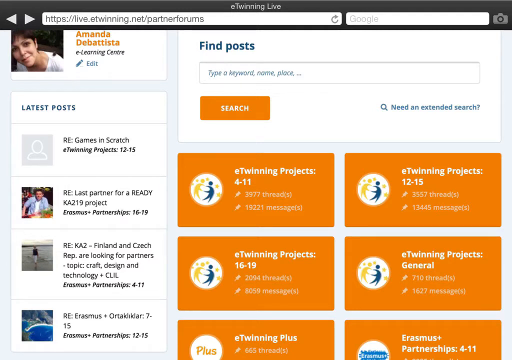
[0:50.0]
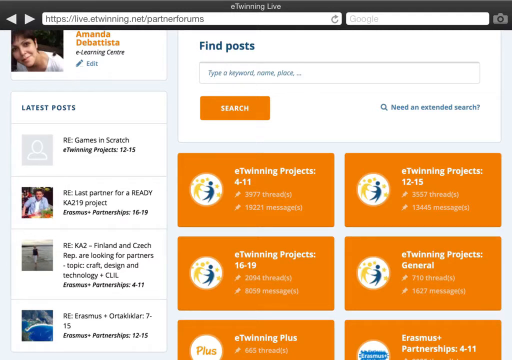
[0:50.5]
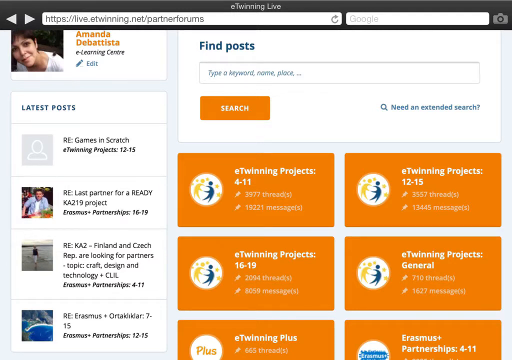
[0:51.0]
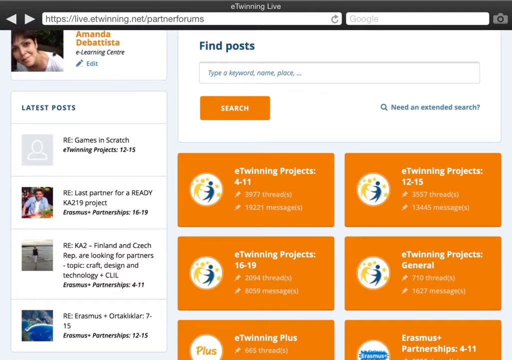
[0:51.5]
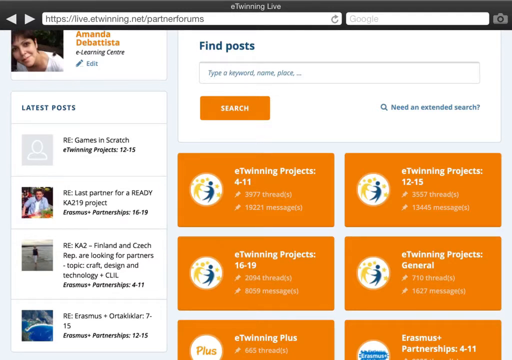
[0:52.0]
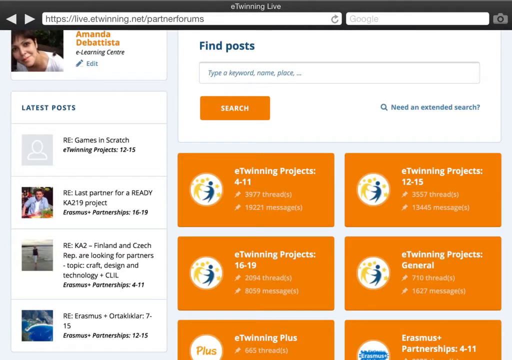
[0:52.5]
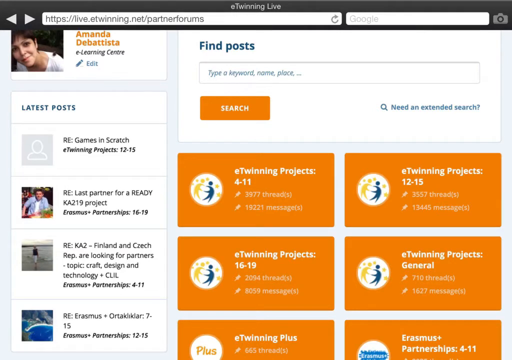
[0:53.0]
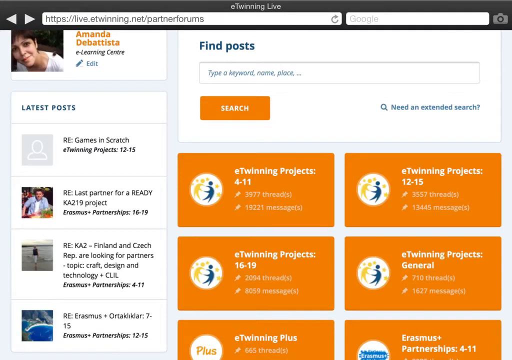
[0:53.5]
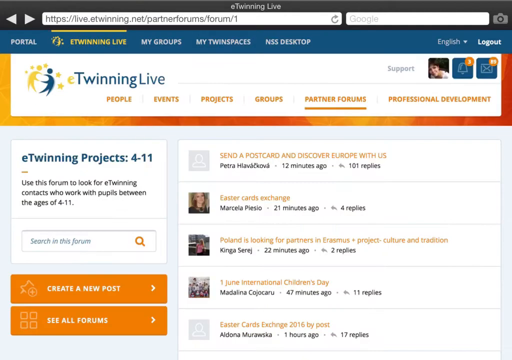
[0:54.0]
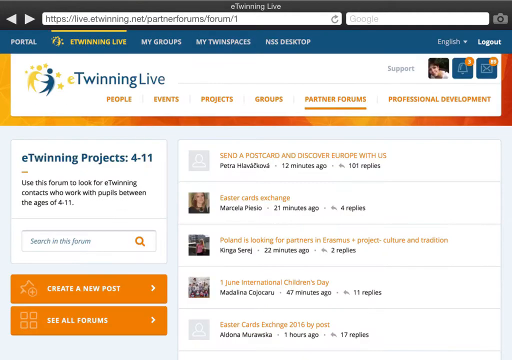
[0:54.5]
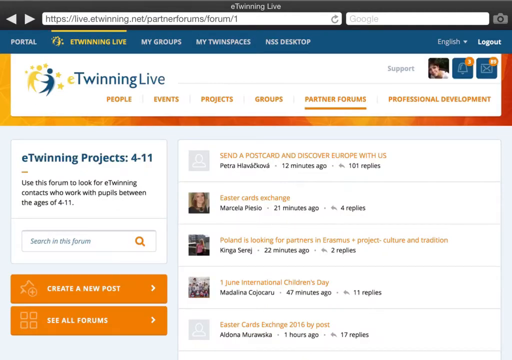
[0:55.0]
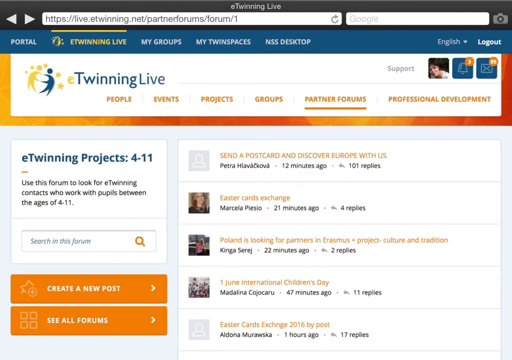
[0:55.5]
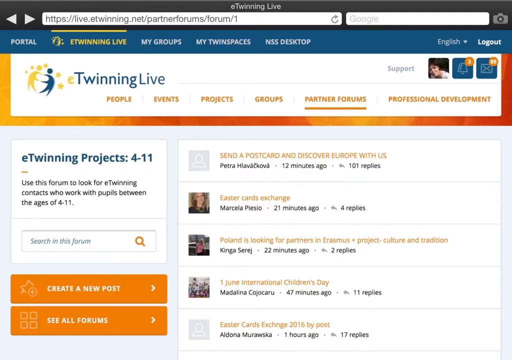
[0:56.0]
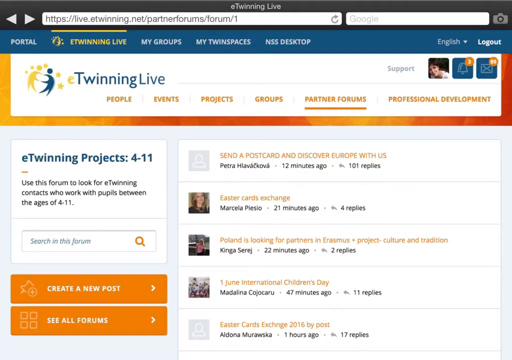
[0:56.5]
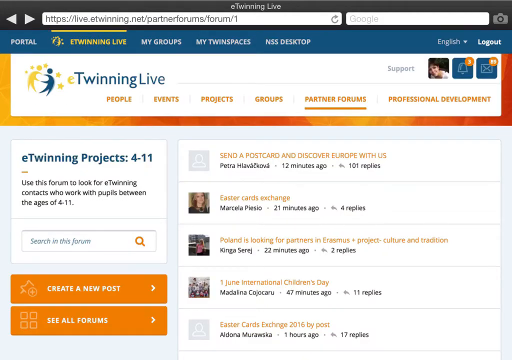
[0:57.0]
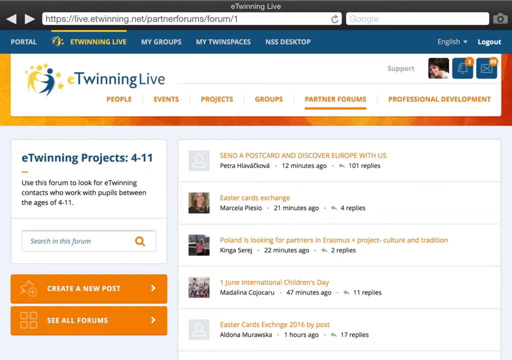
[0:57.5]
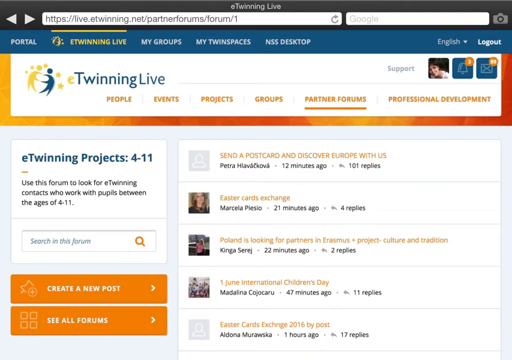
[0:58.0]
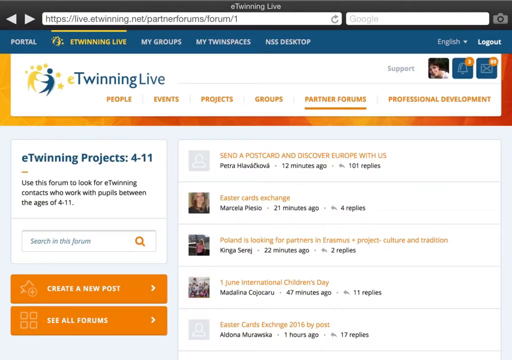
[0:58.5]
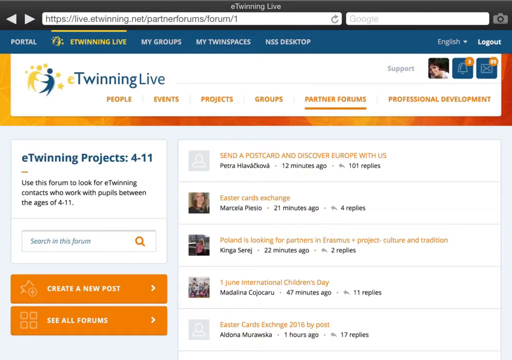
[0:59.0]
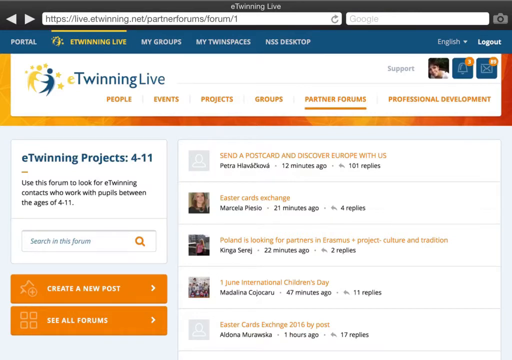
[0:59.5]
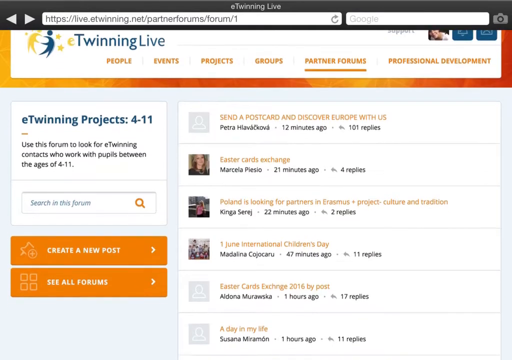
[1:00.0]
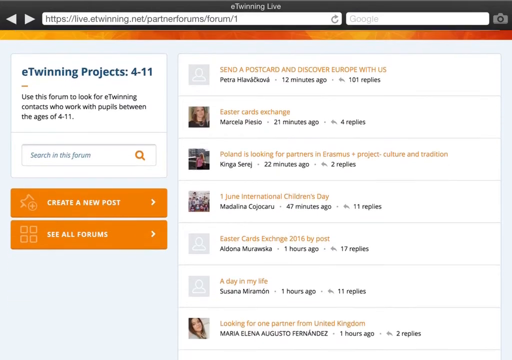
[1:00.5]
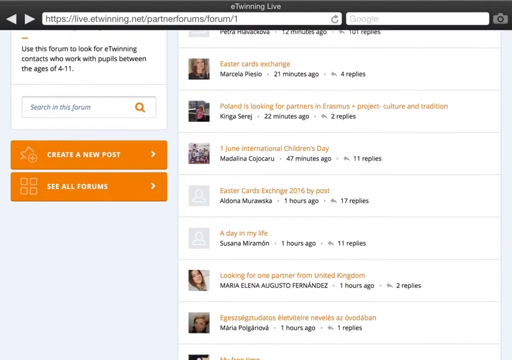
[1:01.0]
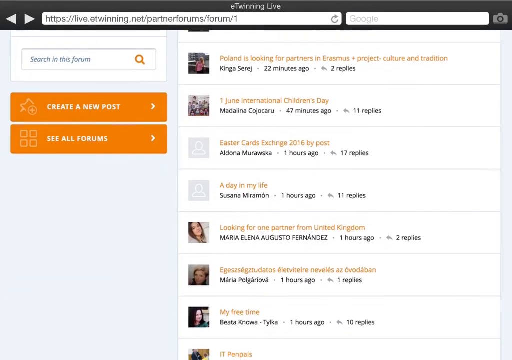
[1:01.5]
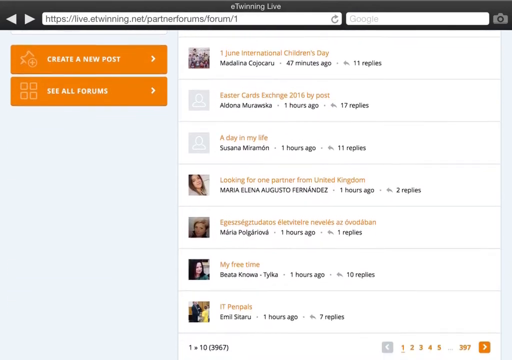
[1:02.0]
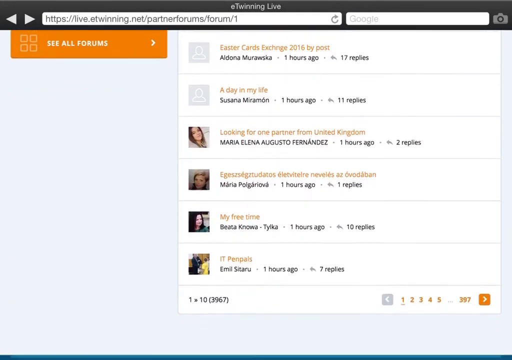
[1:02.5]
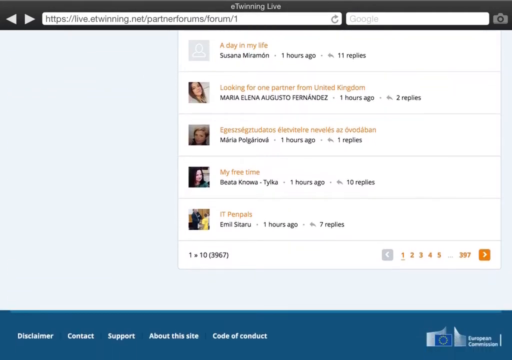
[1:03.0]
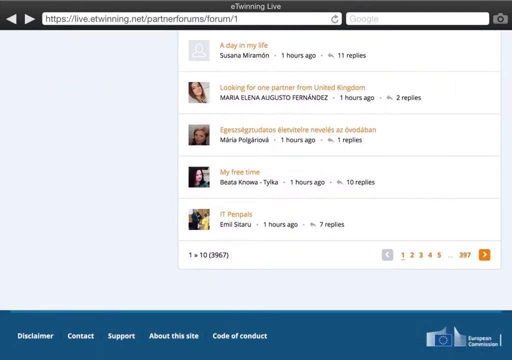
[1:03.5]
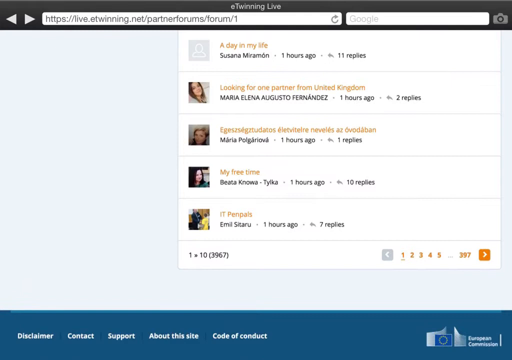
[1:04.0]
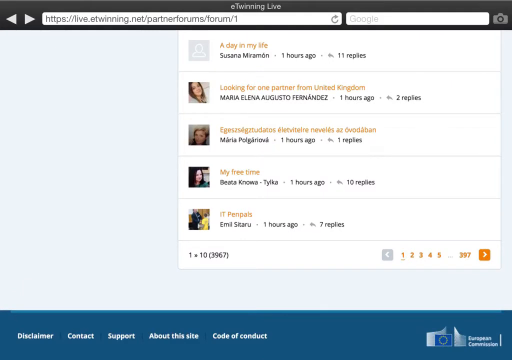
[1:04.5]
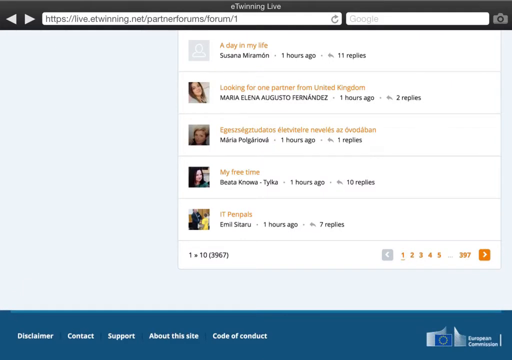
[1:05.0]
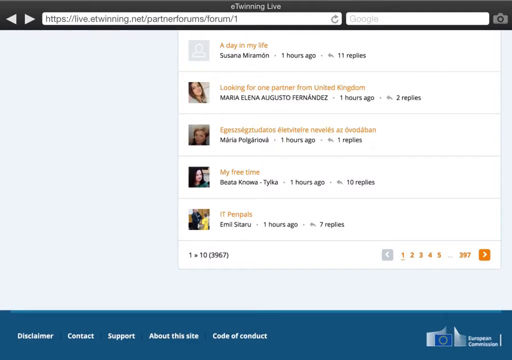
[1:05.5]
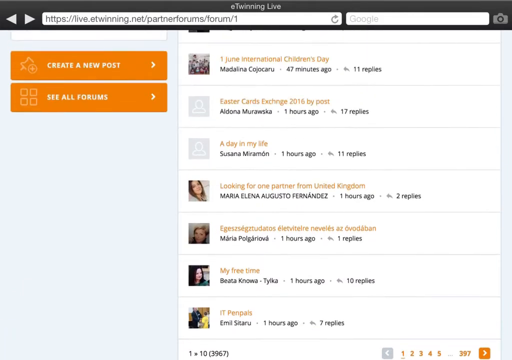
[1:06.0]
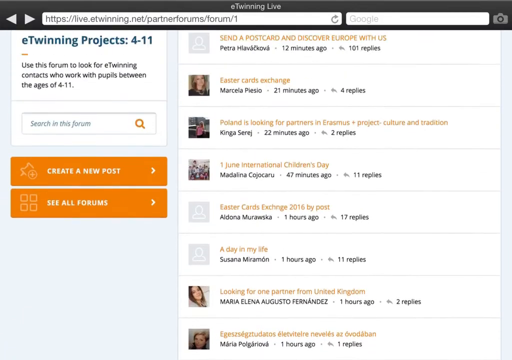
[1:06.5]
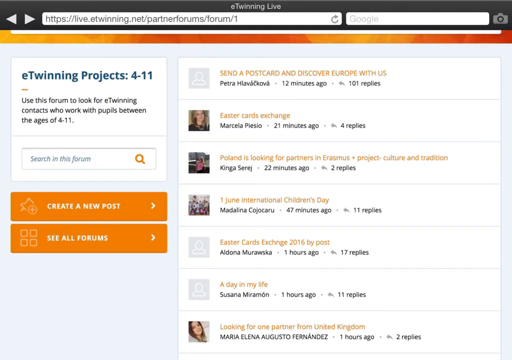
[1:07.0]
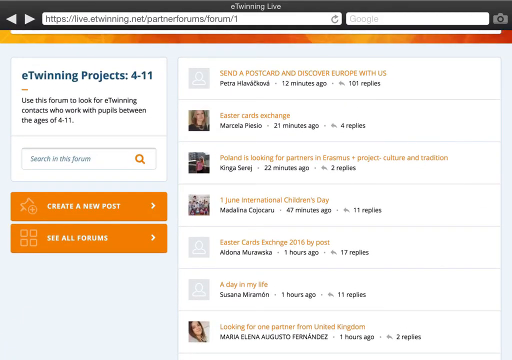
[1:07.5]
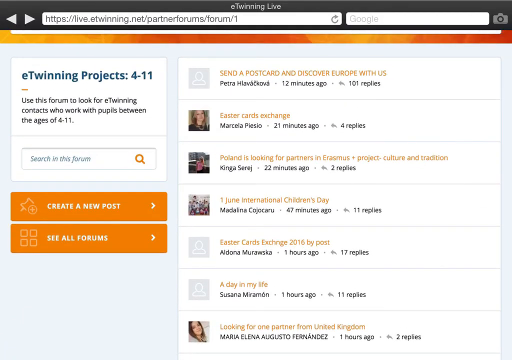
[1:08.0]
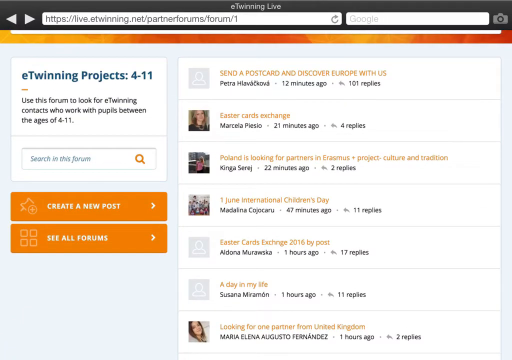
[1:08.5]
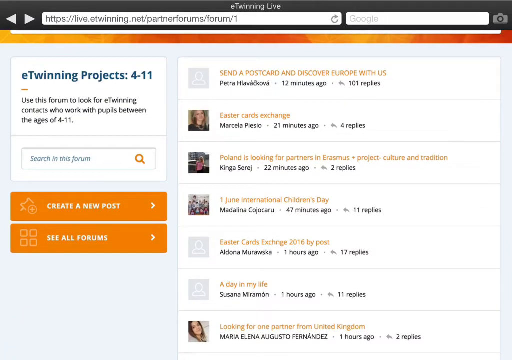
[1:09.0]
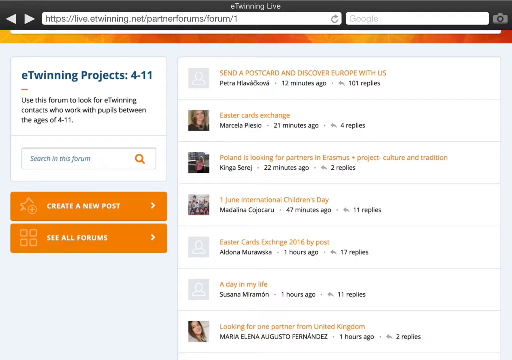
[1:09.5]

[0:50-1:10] The same person's account is now on a different page showing forum posts for eTwinning projects 4 through 11, apparently posted by many different people. The posts include "send a postcard and discover Europe with us", Marcella Piesil's "Easter Cards Exchange", Susana Miramoto's "a day in my life", Madalina Kojakaru's "1 June International Women's Day" and Beda Noltaika's "my free time". The user scrolls slowly up and down the screen, probably looking at all the project offerings. Text at the bottom says "use this form to look for eTwinning contacts who work with pupils between the ages of four to eleven", and below it orange buttons say "create a new post" and "see all forums".